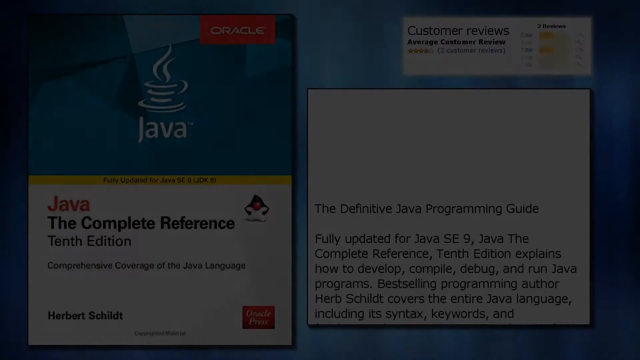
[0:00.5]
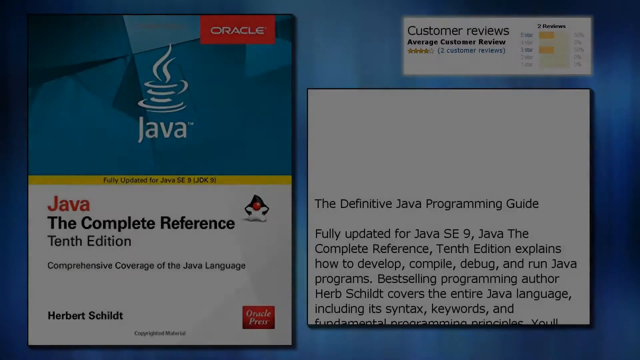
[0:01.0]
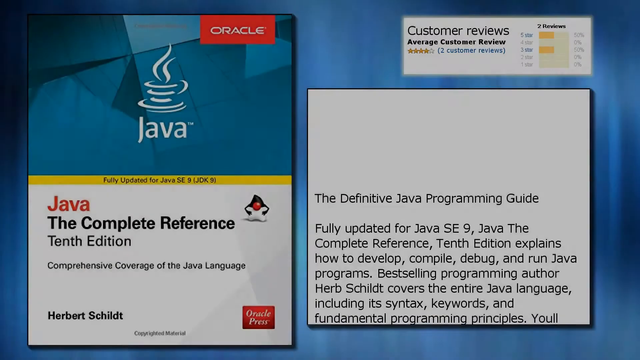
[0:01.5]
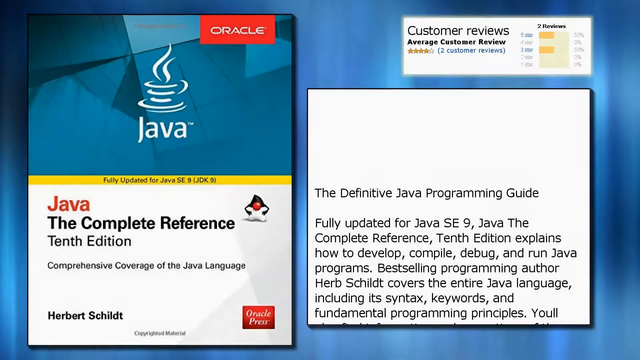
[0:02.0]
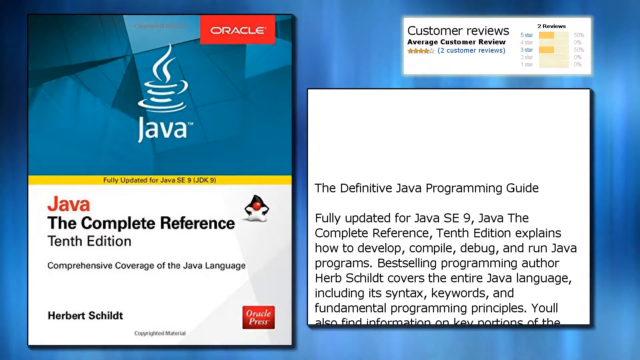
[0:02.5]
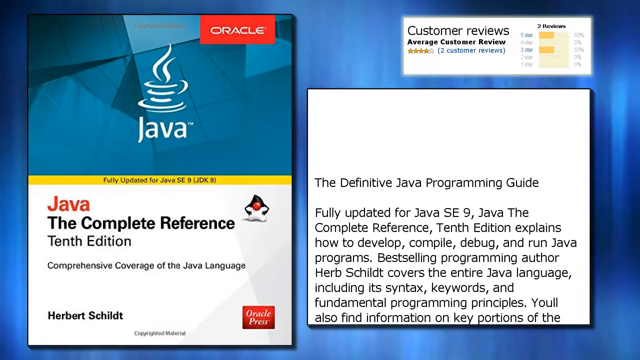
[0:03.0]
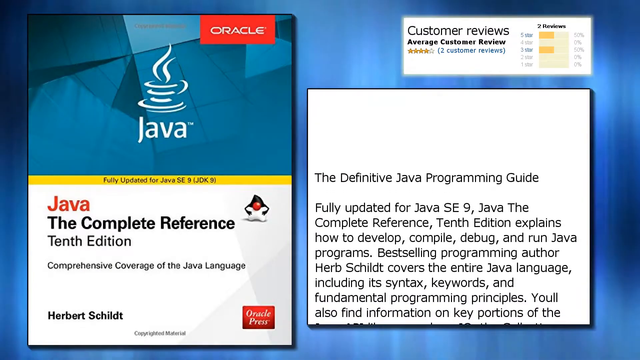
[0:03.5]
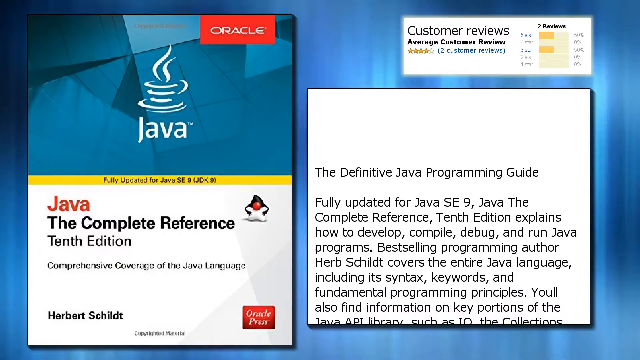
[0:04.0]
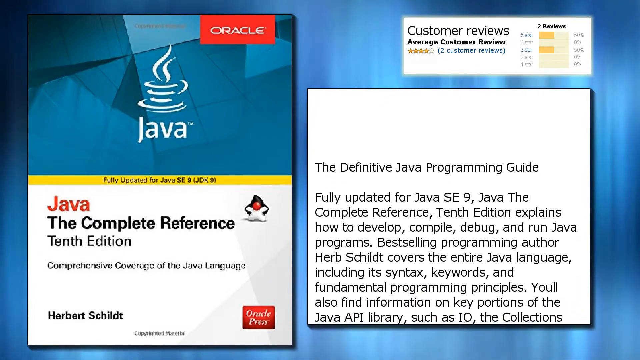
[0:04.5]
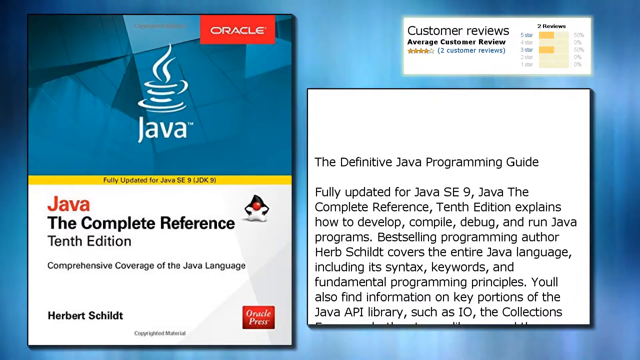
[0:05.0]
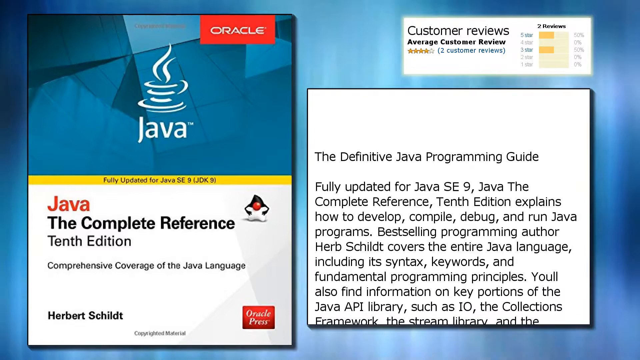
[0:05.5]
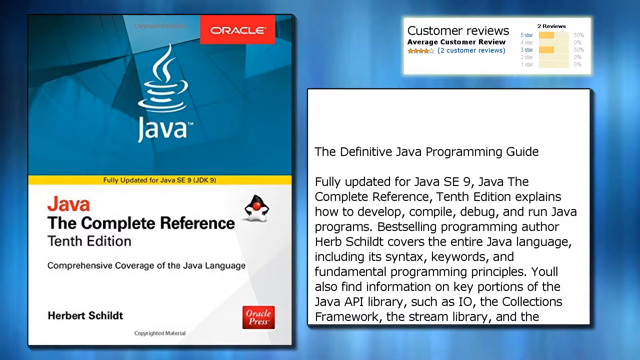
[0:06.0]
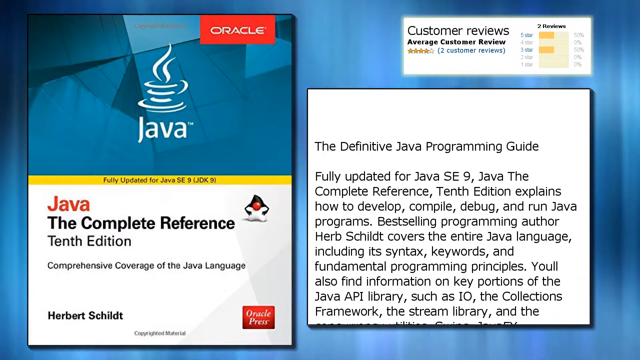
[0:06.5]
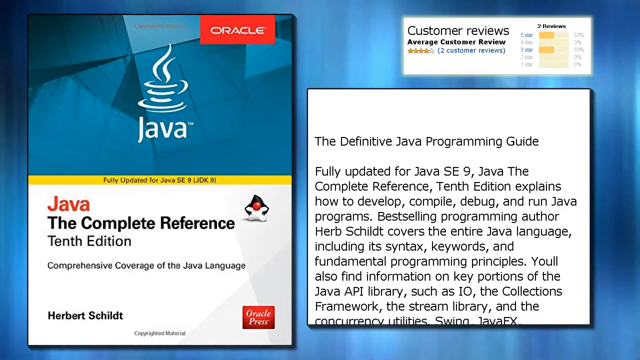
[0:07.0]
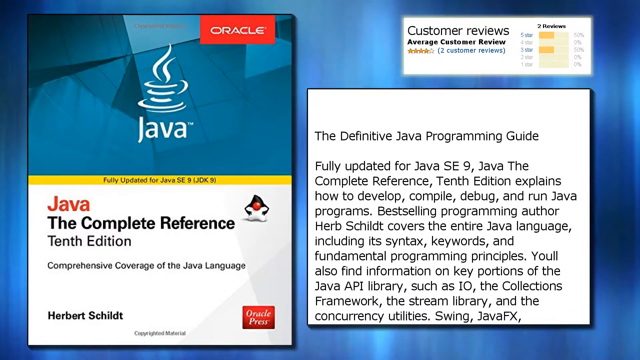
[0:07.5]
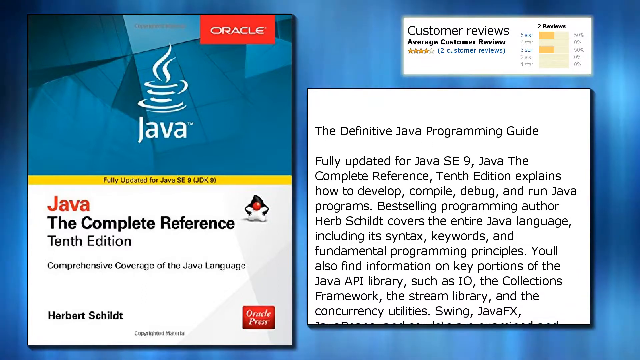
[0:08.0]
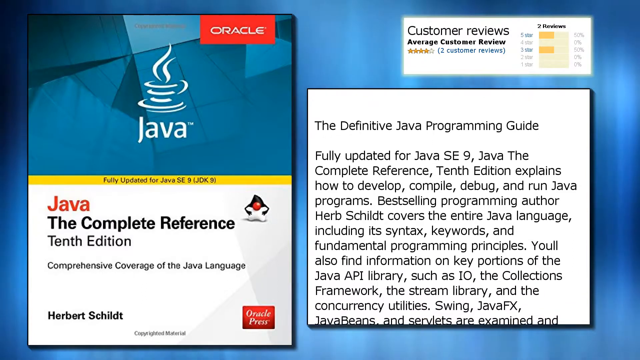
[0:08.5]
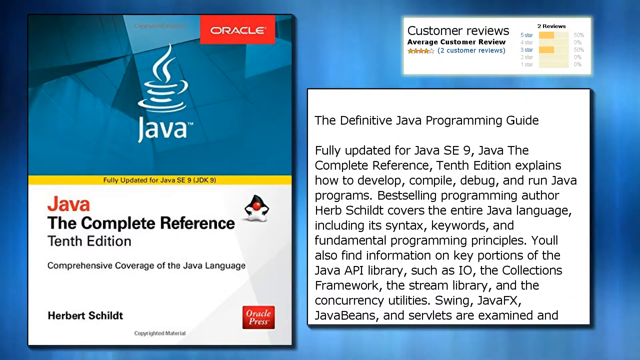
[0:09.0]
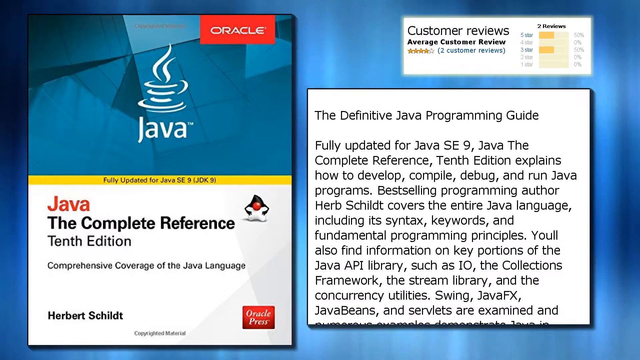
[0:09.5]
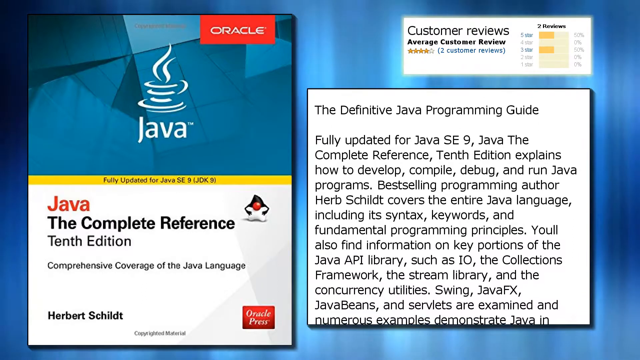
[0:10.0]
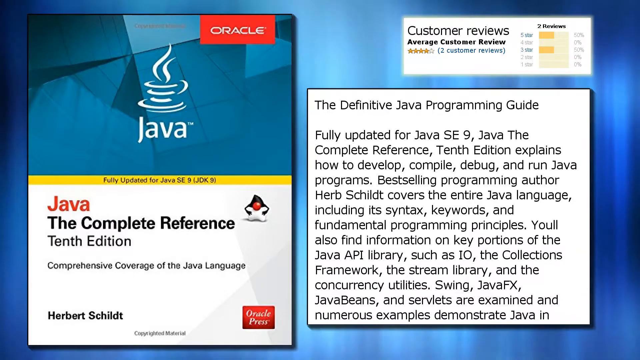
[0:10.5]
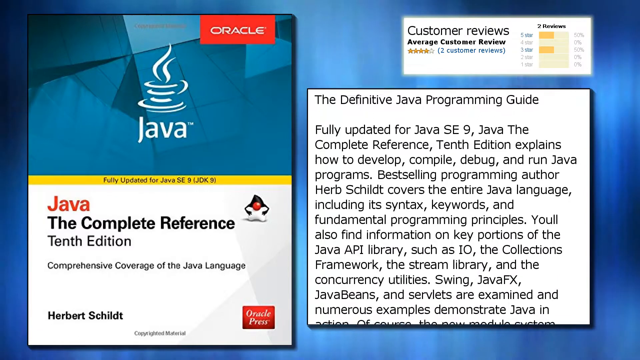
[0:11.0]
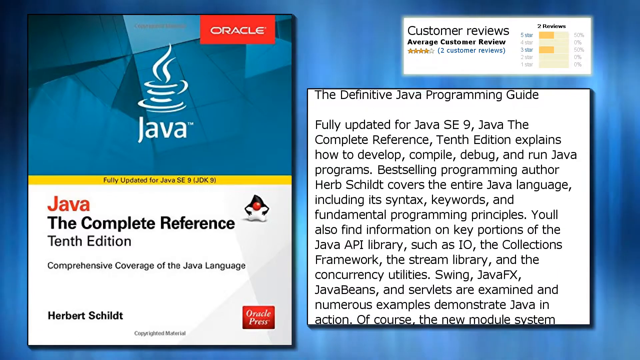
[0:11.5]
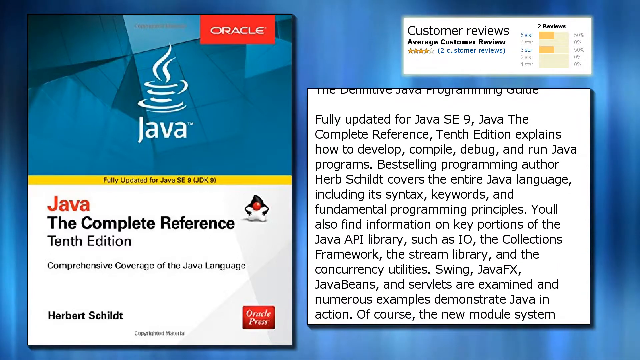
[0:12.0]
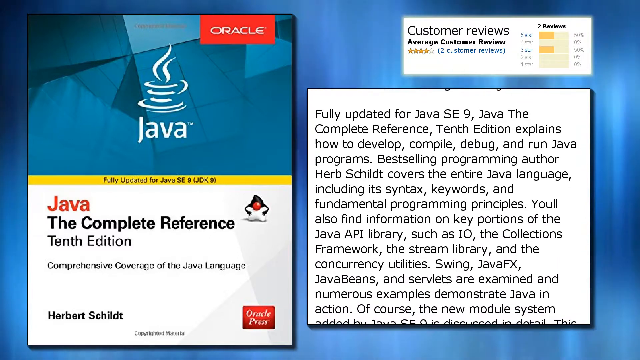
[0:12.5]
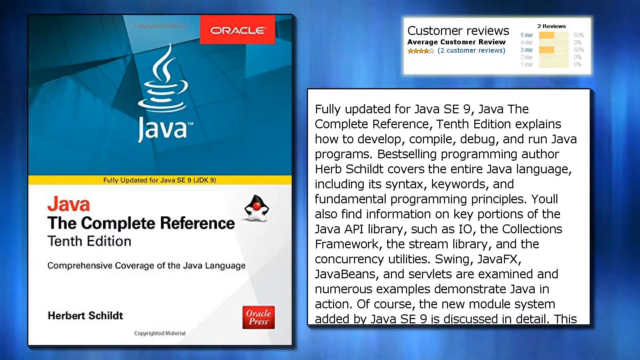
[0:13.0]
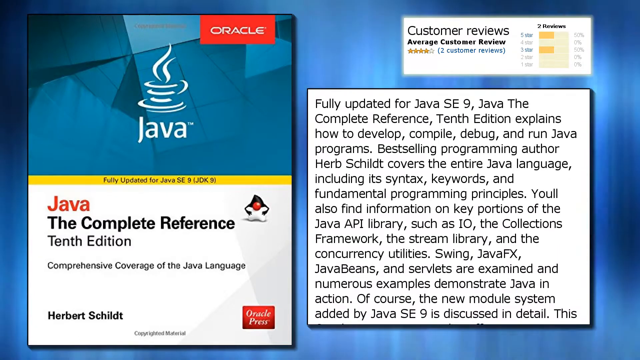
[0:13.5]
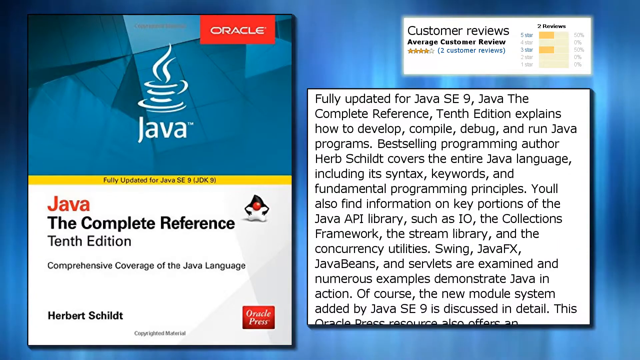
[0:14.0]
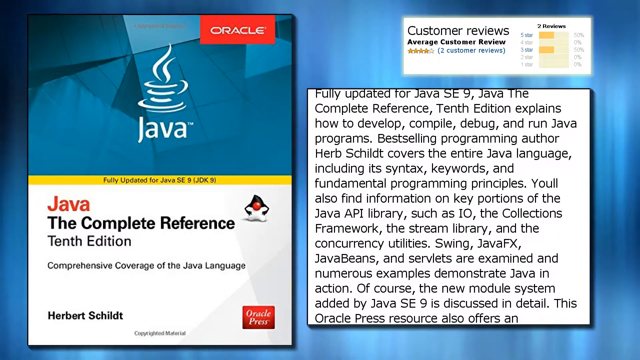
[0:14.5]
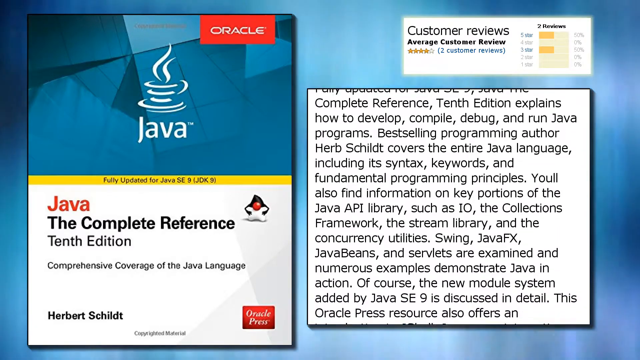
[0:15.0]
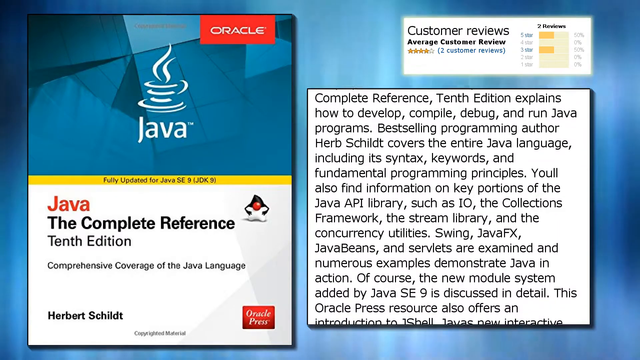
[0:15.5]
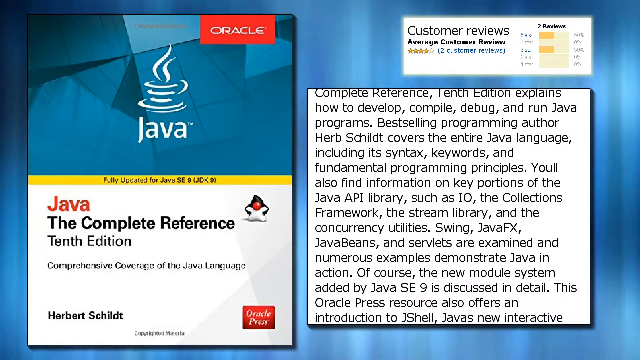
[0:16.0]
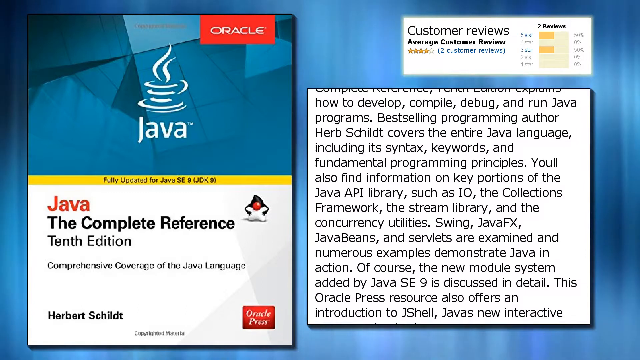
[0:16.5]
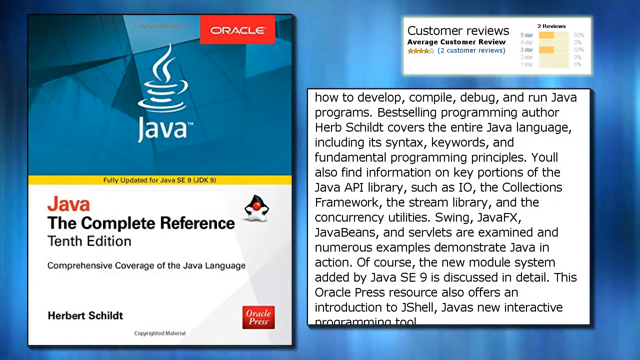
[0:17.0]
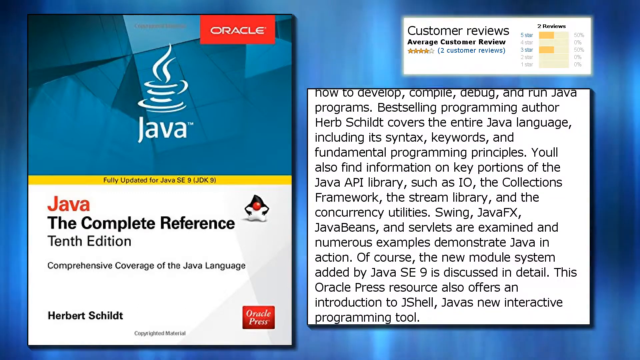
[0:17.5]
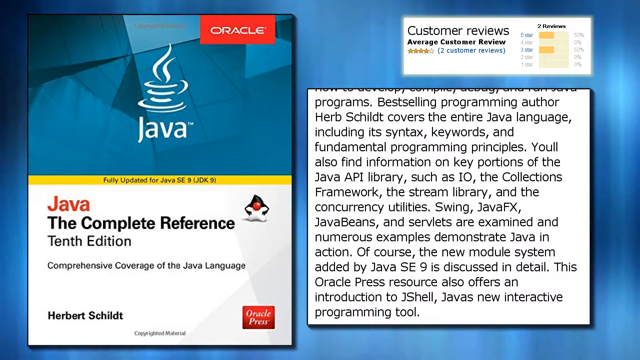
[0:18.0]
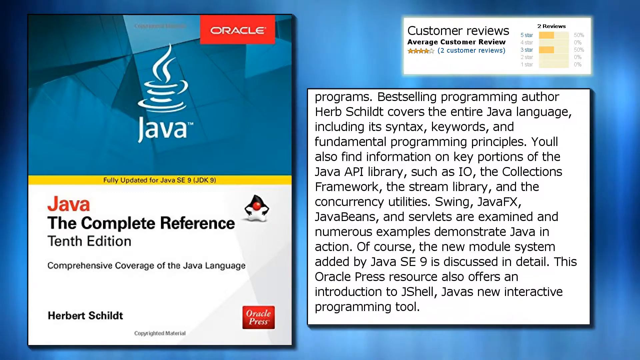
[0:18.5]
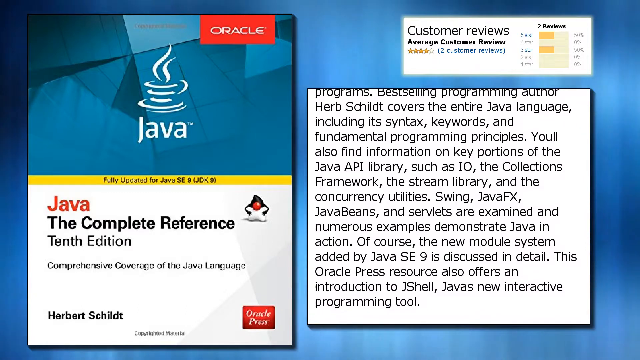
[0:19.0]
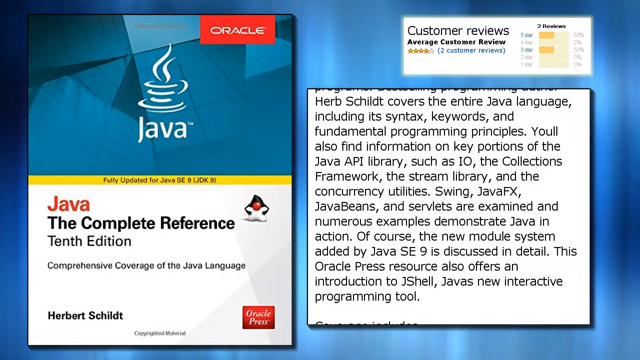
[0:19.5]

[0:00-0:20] The video fades in from a black screen to show a cover of the book Java, the Complete Reference 10th edition on the left side of the screen. On the right, customer reviews appear at the top and a description of the guide is in the bottom right. The description scrolls down the screen slowly, revealing more information. The background behind these elements is a blue color that moves slightly, similar to the movement of the aurora or Northern Lights. Each element on the screen has a small black outline, except the customer review area, which has a light yellow color around it. The description keeps scrolling down.